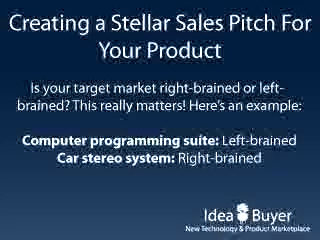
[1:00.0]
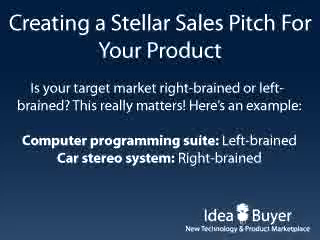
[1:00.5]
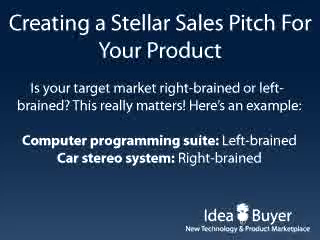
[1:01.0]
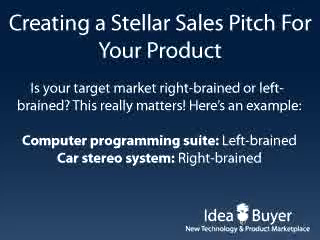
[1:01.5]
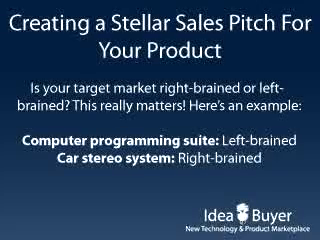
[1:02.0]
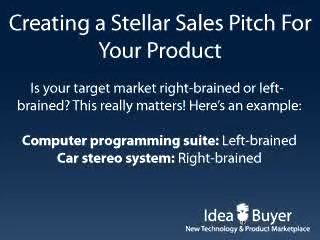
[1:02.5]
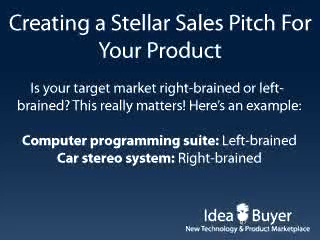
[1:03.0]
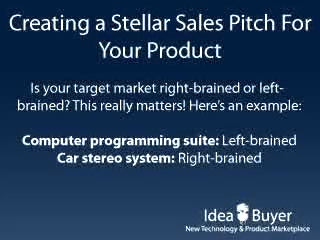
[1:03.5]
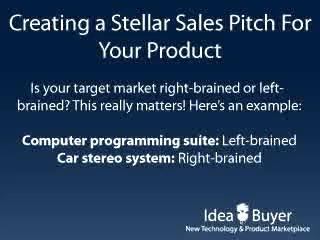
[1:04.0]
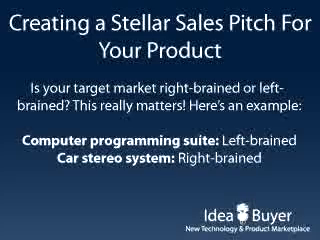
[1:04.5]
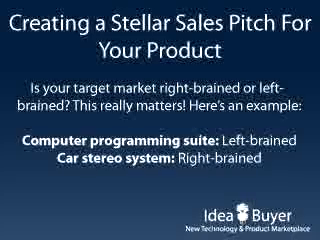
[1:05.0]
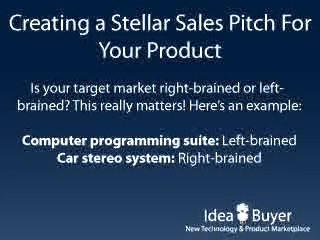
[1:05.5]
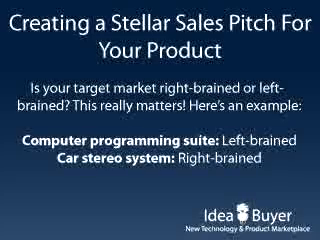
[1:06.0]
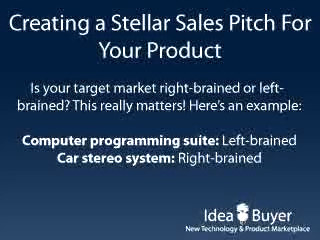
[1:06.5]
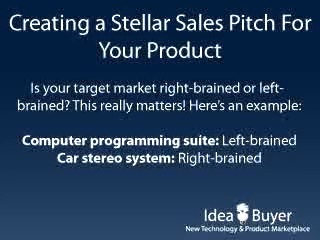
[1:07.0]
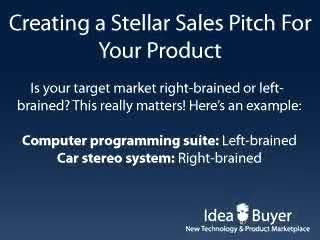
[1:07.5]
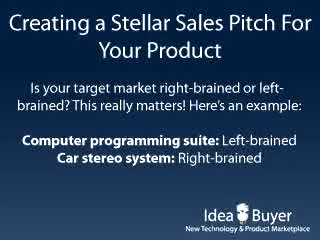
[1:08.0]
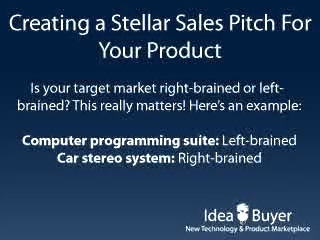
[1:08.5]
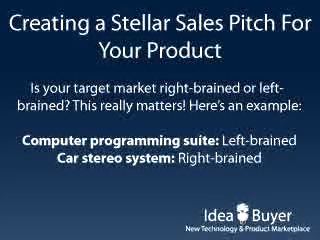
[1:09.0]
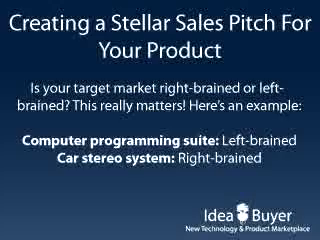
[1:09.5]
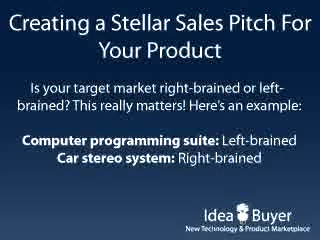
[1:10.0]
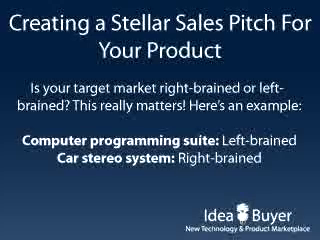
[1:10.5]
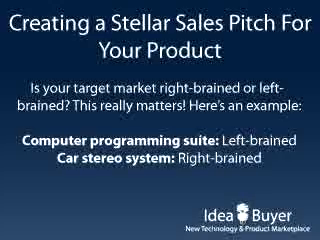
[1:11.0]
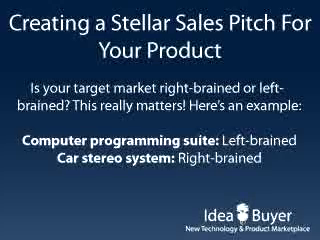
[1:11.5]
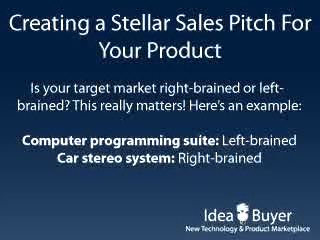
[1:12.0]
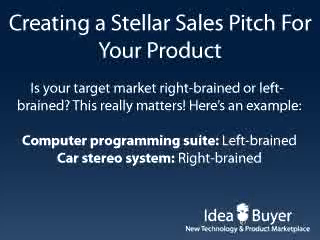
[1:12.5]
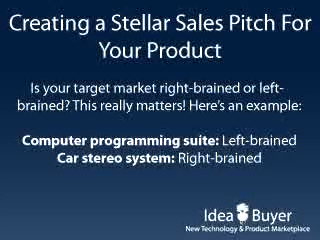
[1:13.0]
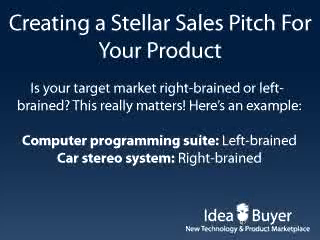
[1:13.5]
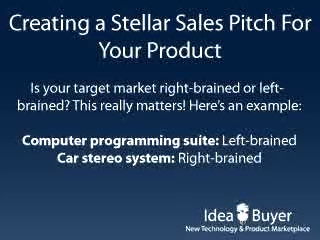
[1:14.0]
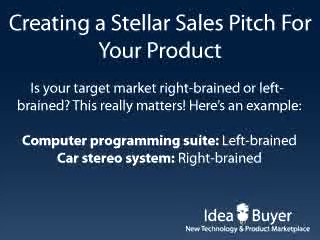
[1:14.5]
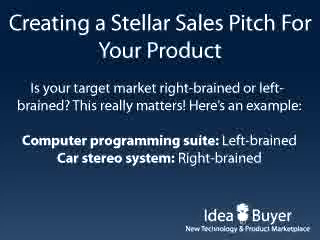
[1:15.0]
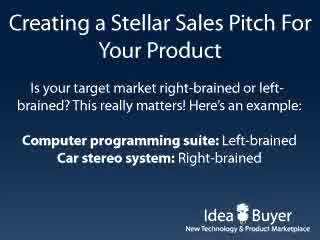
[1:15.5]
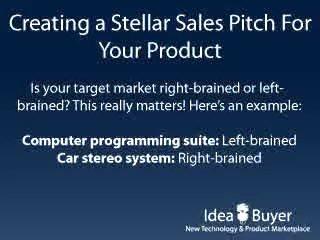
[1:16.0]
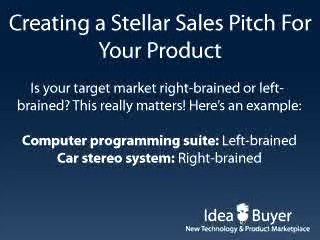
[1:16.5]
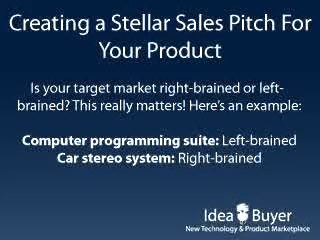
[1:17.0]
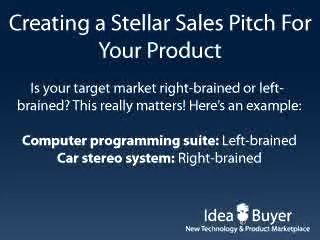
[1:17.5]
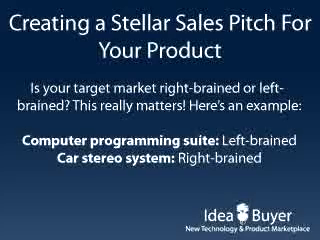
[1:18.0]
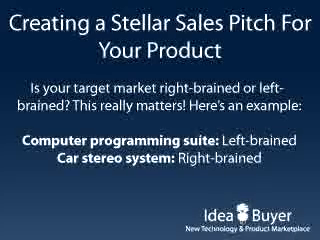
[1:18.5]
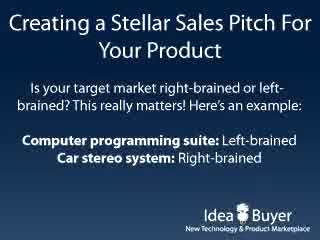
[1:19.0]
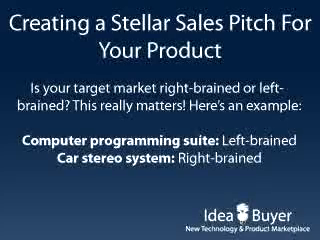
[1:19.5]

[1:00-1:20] White text on the blue screen asks "is your target market right brain or left brain? this really matters," with examples: "computer programmer suite" as left brain and "car stereo system" as right brain. The screen stays on this slide the entire time, and the text does not change.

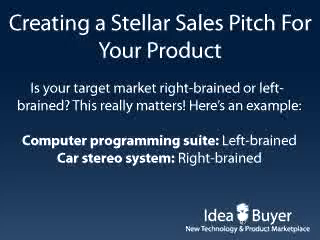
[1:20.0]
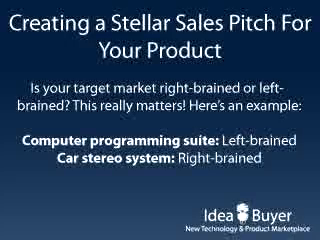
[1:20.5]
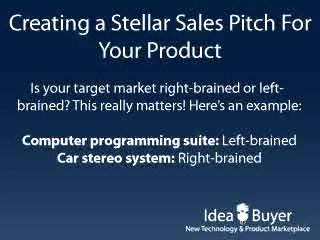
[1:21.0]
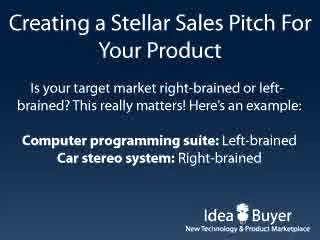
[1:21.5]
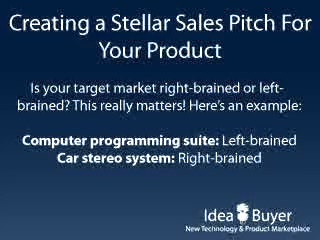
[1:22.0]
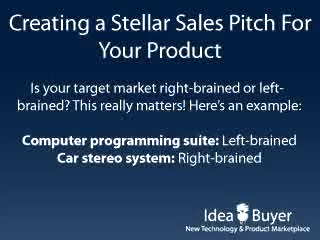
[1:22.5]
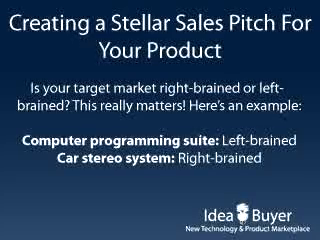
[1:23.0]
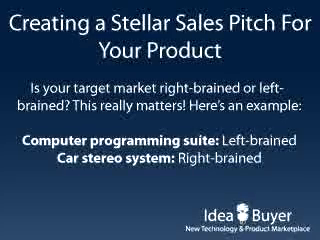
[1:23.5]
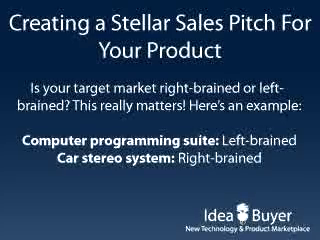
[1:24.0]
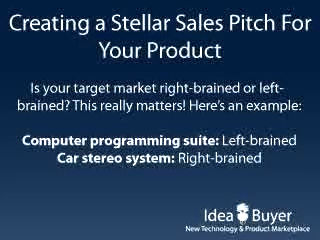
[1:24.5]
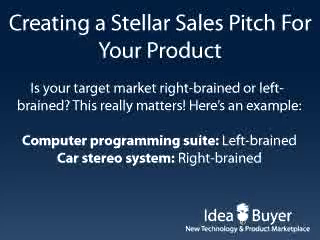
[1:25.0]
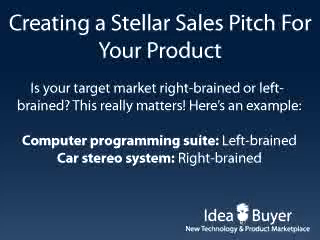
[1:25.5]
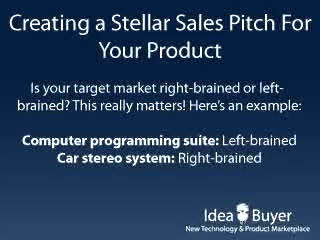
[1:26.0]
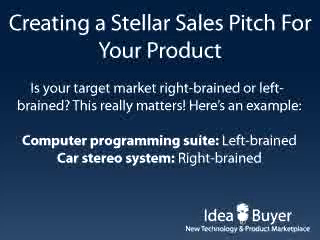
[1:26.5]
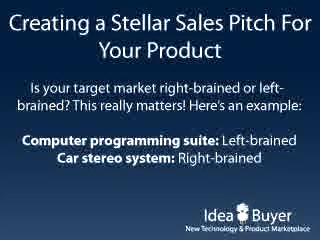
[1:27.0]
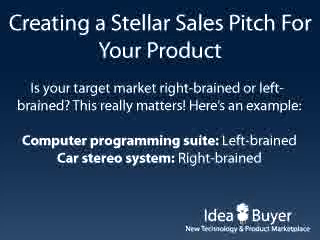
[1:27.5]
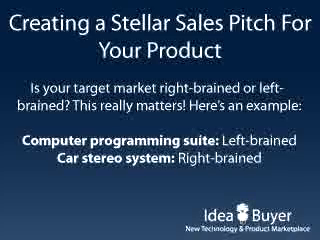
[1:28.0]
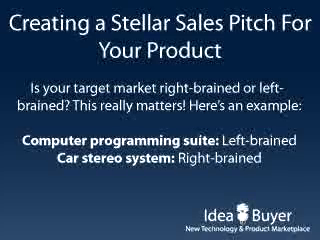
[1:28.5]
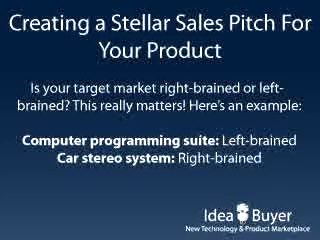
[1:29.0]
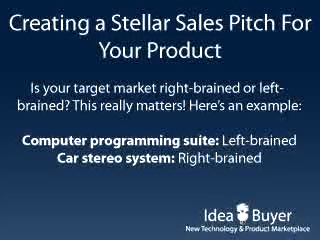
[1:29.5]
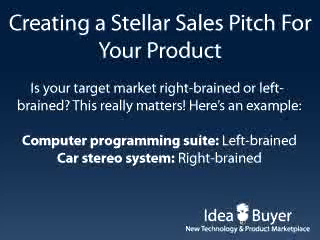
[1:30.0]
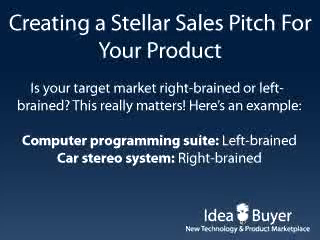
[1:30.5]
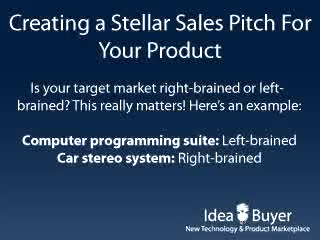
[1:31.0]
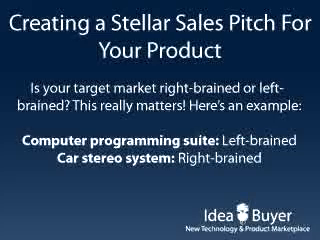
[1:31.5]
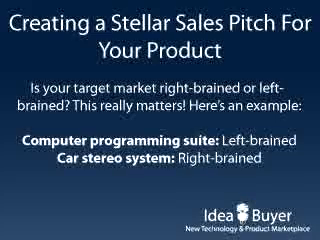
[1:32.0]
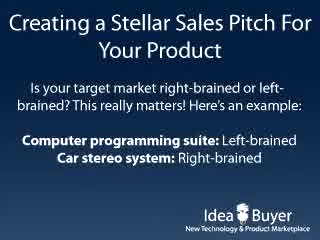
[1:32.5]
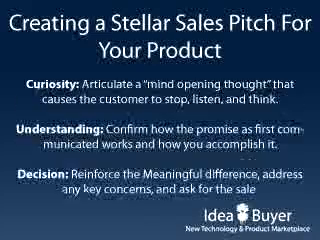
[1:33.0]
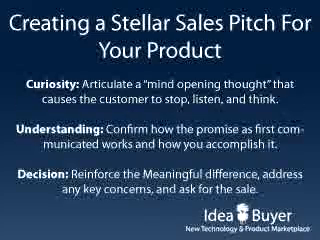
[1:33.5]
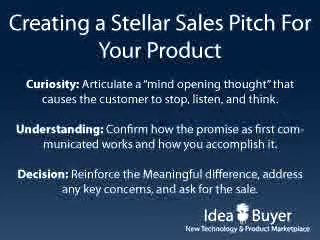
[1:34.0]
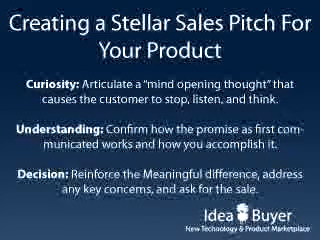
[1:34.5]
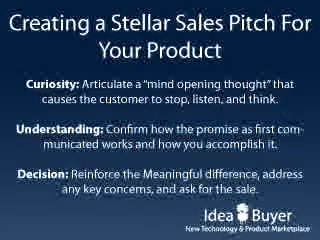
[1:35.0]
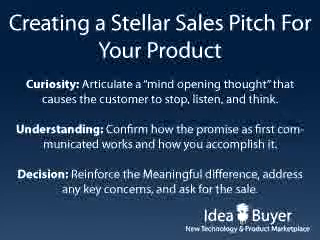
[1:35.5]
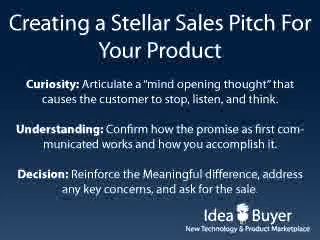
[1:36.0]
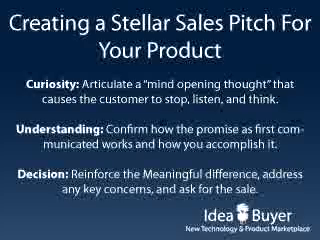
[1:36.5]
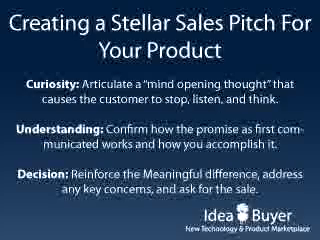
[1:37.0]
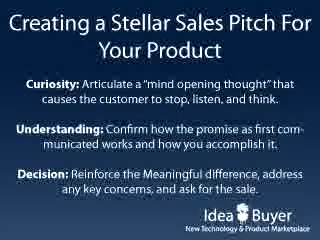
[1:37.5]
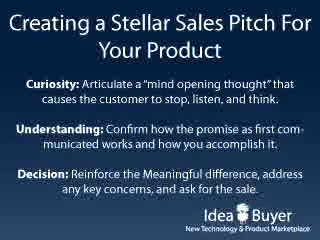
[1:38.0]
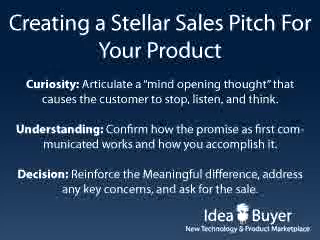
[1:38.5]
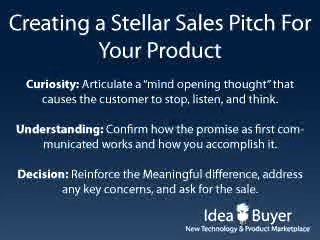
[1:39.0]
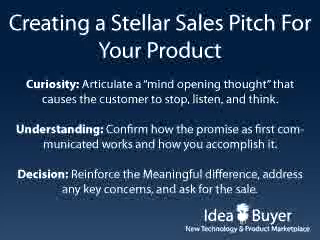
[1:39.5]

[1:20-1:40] The same slide about the computer programmer suite and car stereo system, right brain or left brain, is shown, then the presentation moves to the next slide. It reads "curiosity: articulate a mind opening thought that causes customer to stop," followed by "understand and confirm how the promise as first communicated works and how you accomplish it." The bold word "decision" appears with a semicolon, followed by "reinforce meaningful difference, address key concerns and ask for the sale."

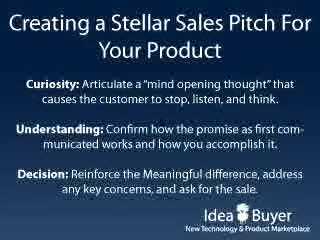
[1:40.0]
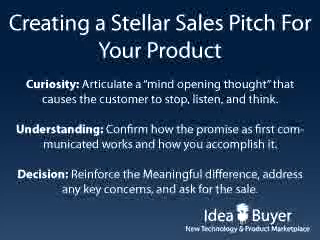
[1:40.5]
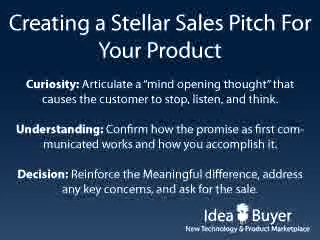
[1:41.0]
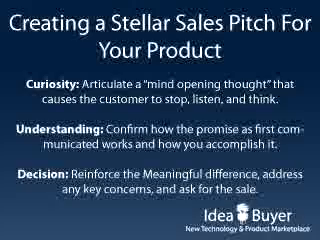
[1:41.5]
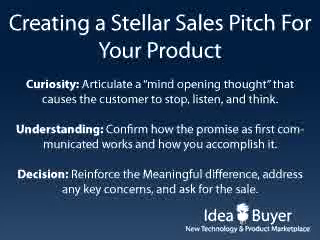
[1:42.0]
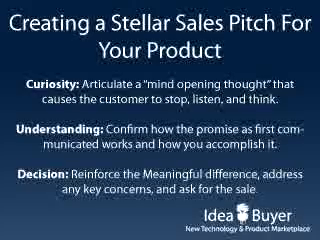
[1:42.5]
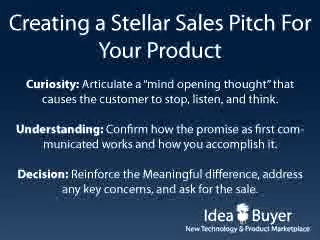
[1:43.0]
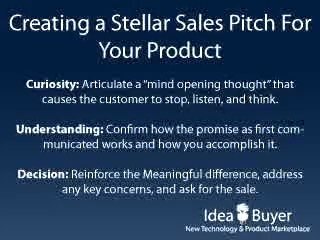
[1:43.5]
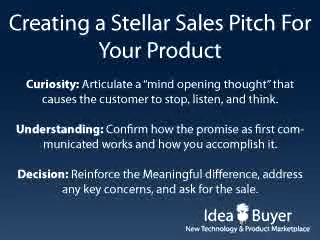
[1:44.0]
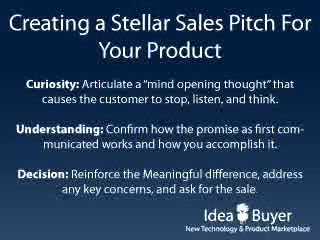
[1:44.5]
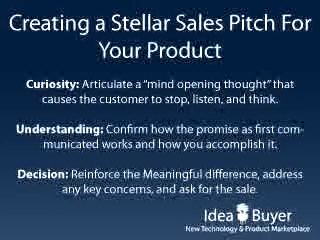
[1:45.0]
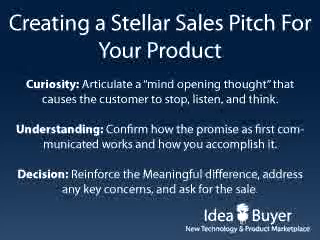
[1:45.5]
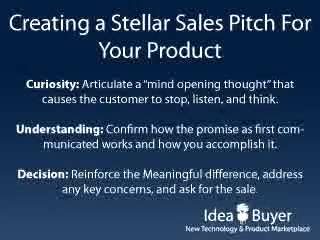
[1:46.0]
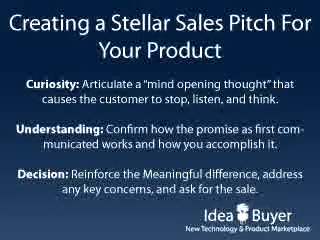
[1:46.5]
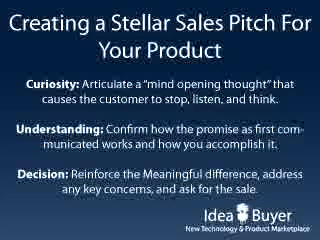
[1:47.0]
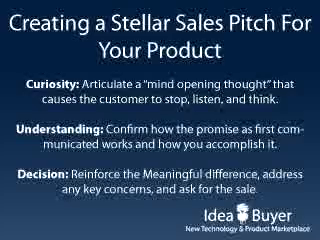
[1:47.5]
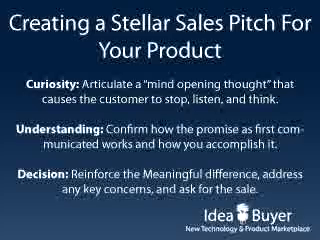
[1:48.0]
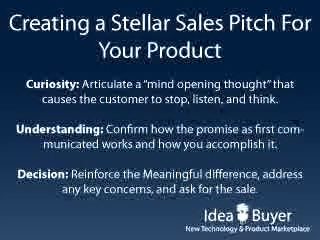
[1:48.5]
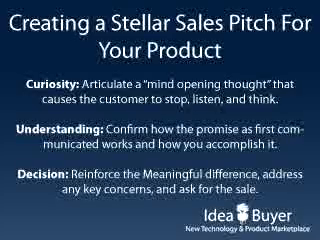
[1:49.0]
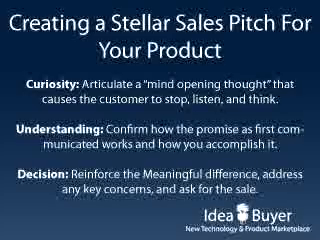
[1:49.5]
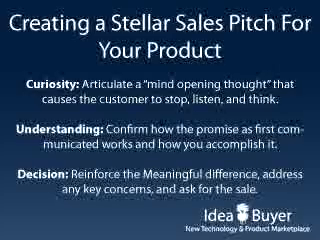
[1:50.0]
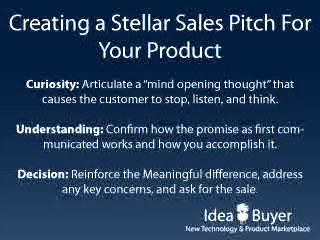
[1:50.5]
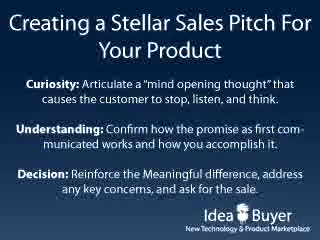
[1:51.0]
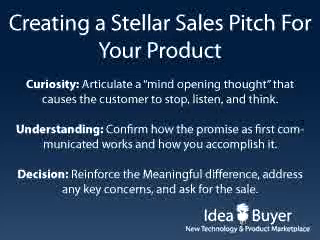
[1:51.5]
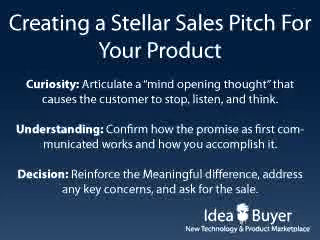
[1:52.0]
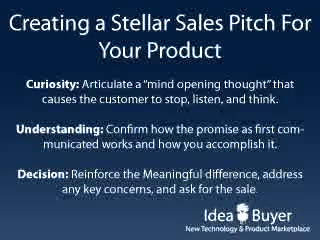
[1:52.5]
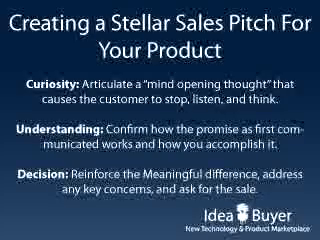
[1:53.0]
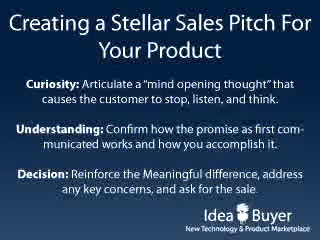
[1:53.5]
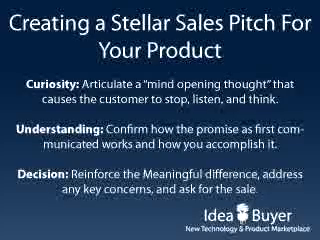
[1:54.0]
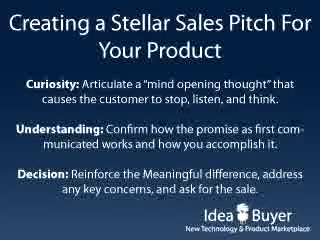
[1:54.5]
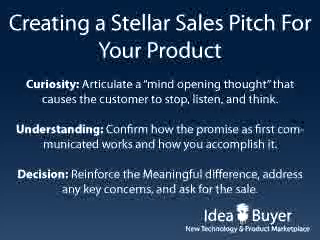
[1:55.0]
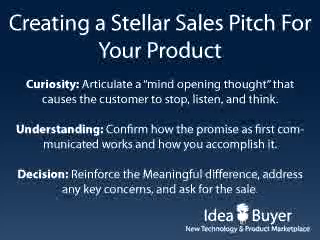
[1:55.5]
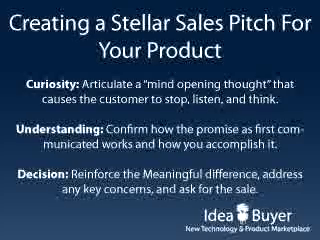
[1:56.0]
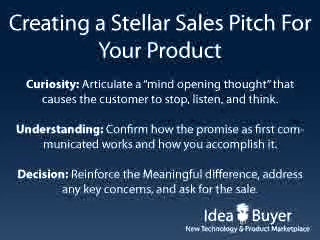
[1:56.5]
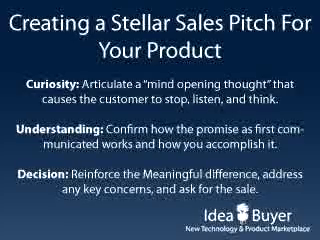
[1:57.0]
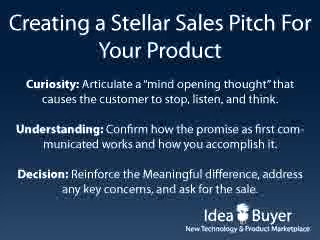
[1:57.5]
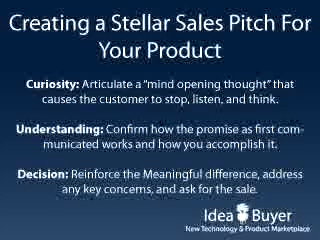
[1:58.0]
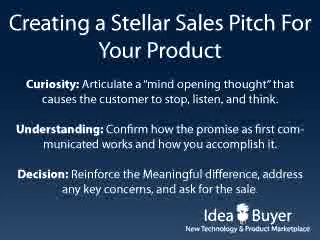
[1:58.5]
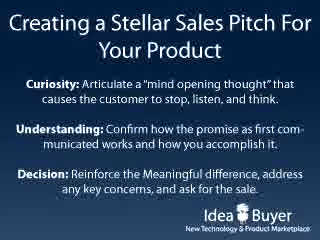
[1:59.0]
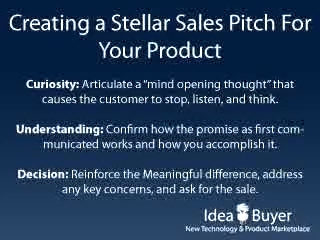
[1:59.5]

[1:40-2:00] The slide, titled with creating a sales pitch for your product, lists "curiosity: articulate a mind-opening thought that causes the customer to stop," then understanding: "confirm how the promise as first communicated works and how you accomplish it," and decision: "reinforce meaningful difference, address any key concerns, ask for the sale." "IdeaBuyer" and "new technology and product marketplace" are still shown. The screen does not change.